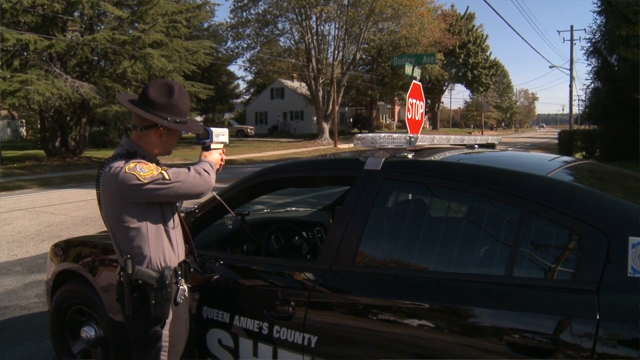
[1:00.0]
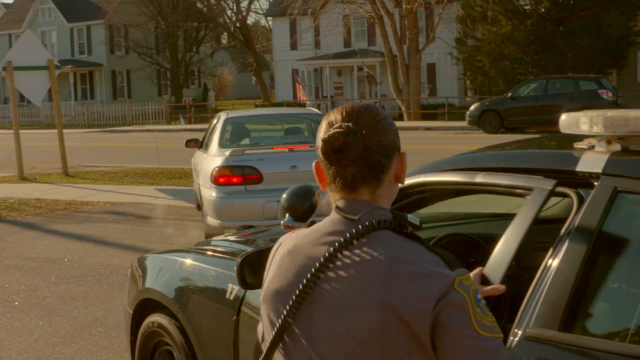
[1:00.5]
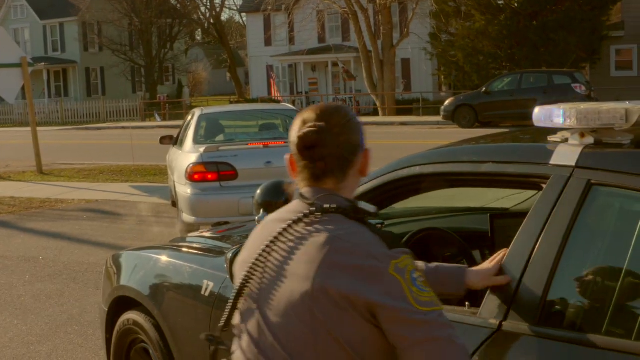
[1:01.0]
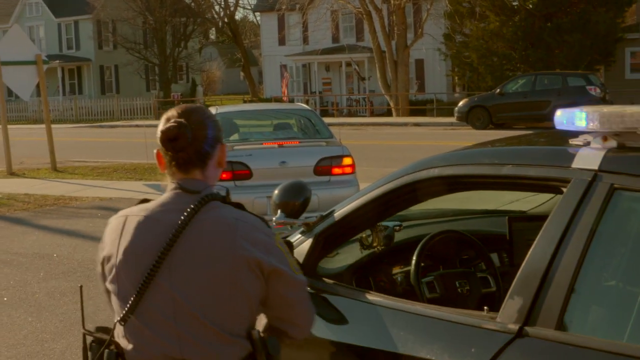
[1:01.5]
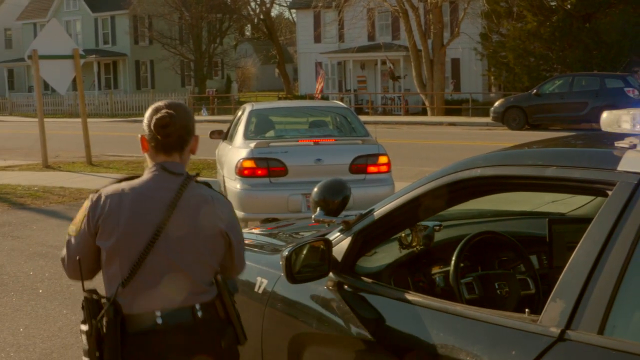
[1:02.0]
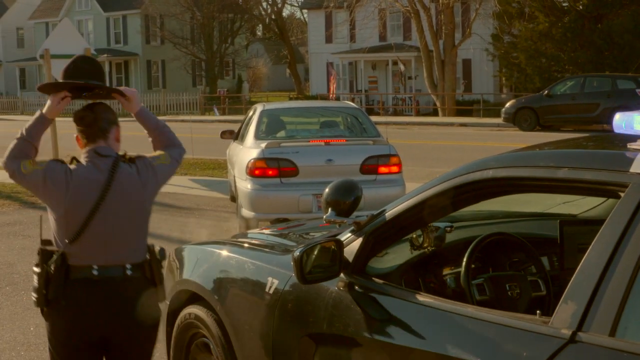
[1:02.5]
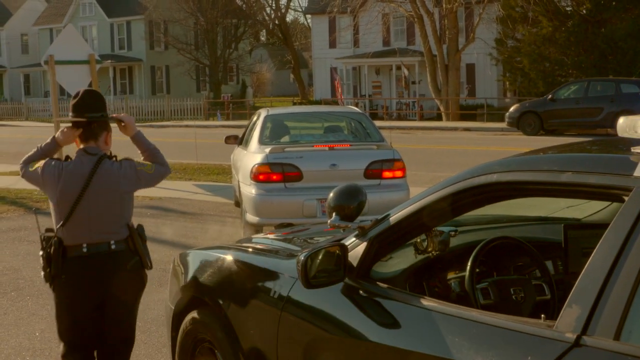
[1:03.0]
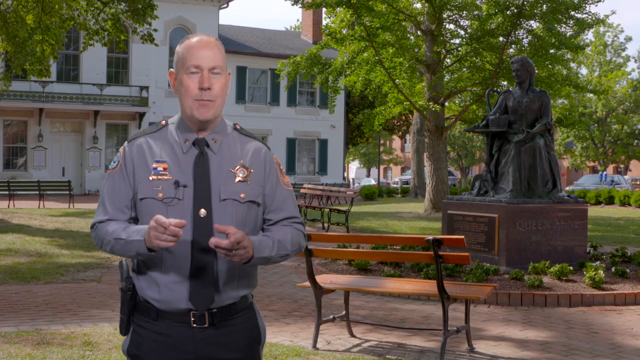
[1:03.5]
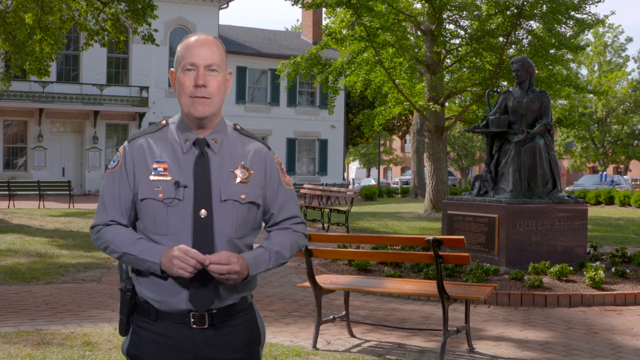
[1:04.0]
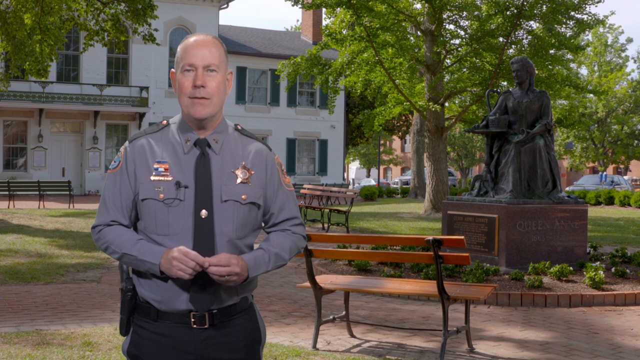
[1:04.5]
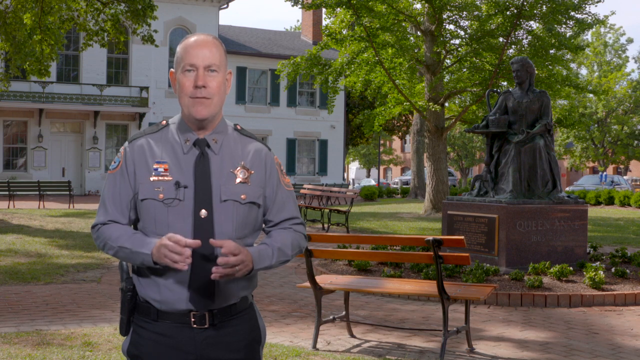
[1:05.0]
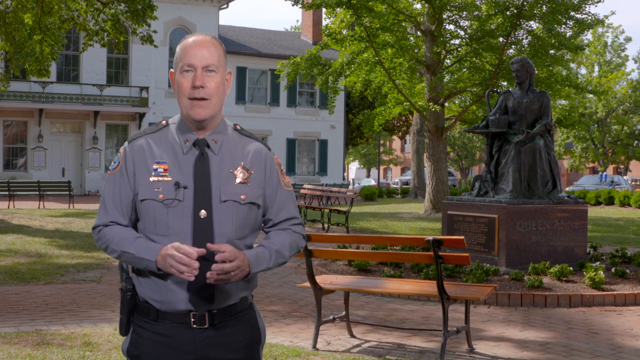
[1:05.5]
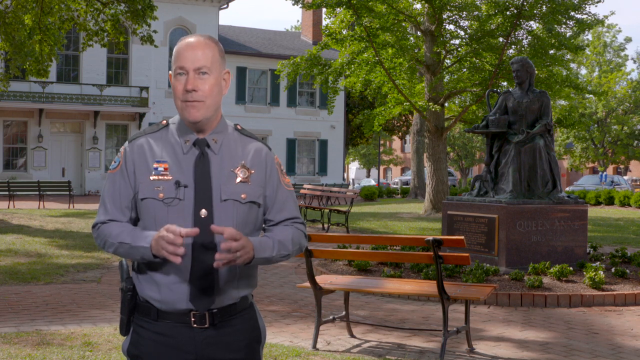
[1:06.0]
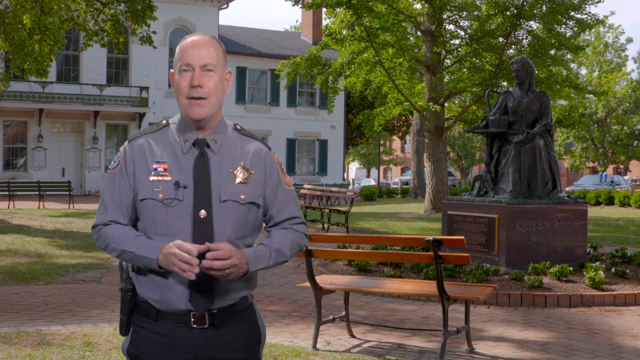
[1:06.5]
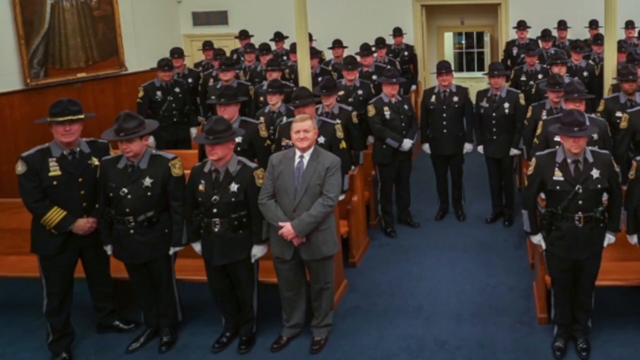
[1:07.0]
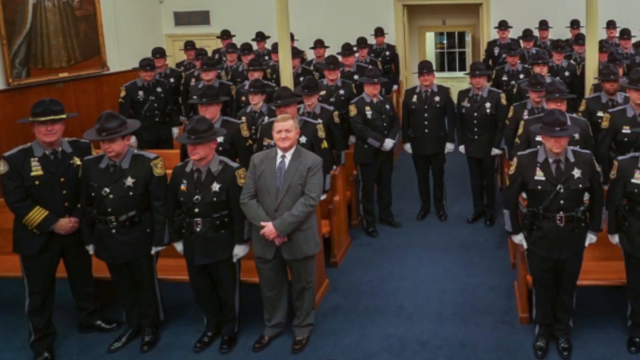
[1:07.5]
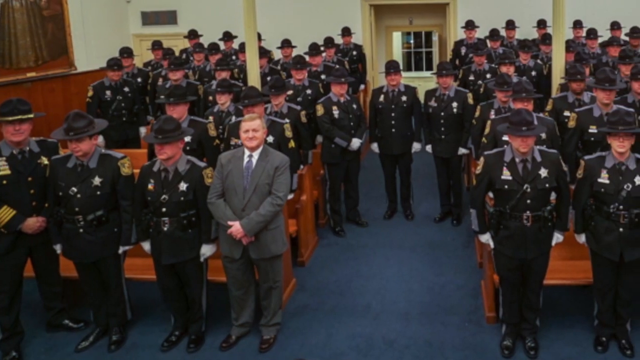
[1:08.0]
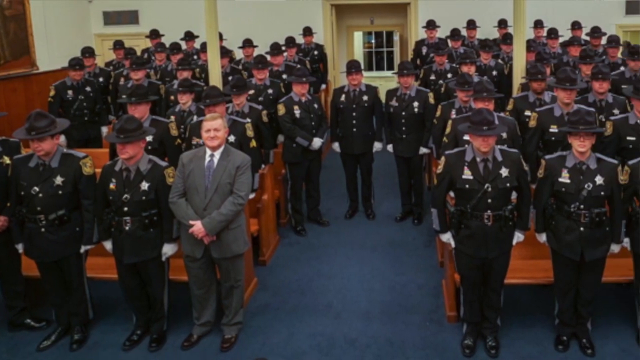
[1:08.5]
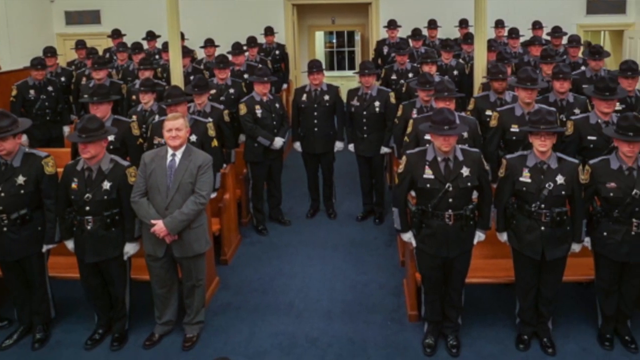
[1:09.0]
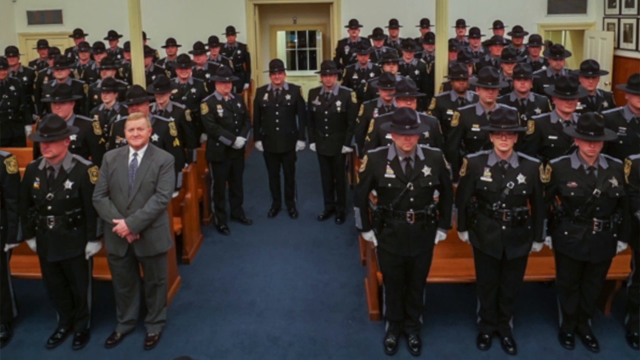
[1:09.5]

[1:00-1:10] The sheriff holds up his speed detector at a sort of stop-sign intersection. He wears a sheriff's hat and a sheriff badge and waits by a police car with the speed detector in hand. After a screen transition, an individual in a white car is pulled over by a police officer. The video transitions back to the older male police officer, the third officer seen earlier, and then to a screen showing various police officers in uniform and a man in a gray suit.